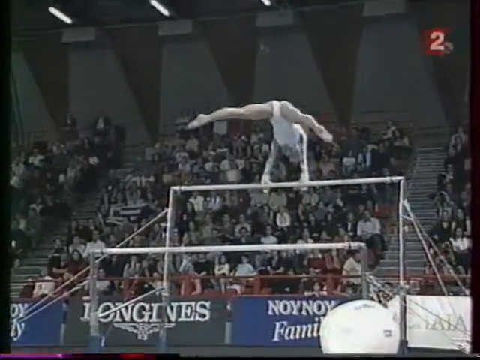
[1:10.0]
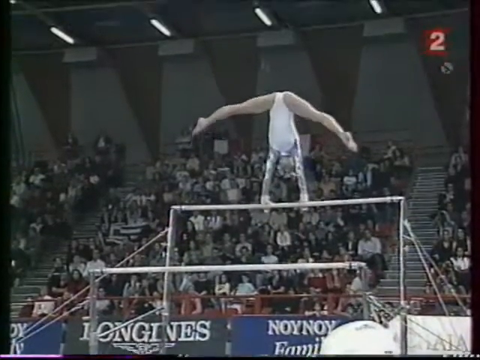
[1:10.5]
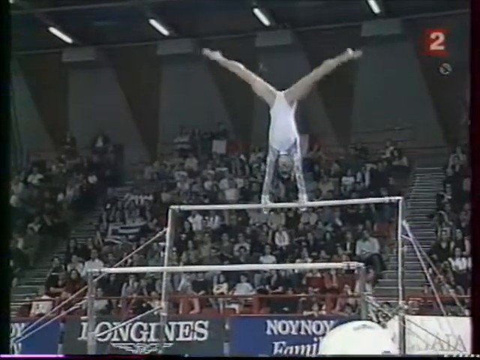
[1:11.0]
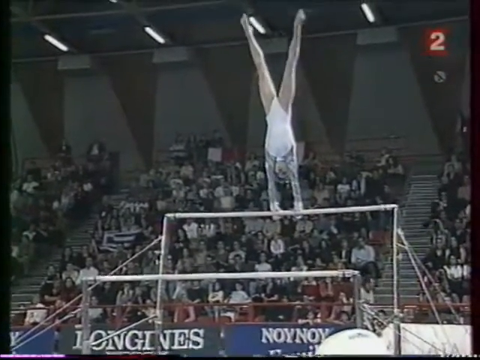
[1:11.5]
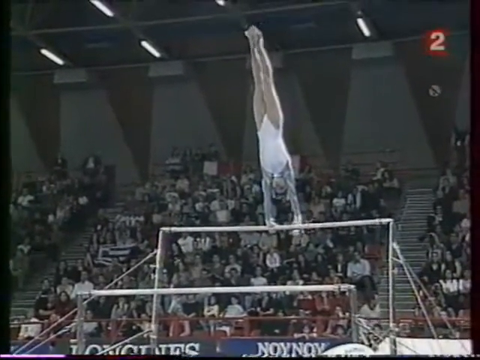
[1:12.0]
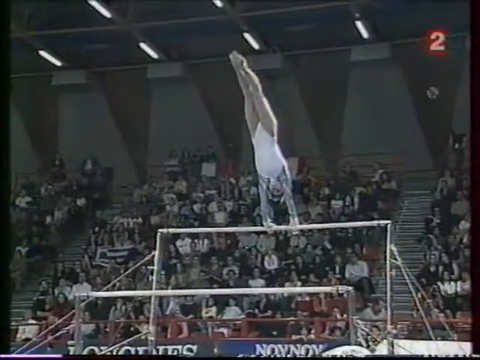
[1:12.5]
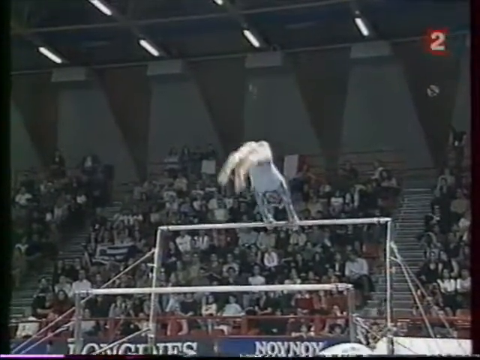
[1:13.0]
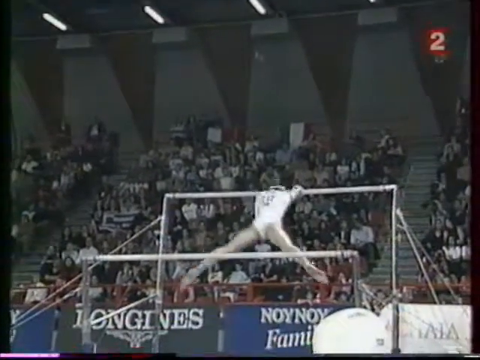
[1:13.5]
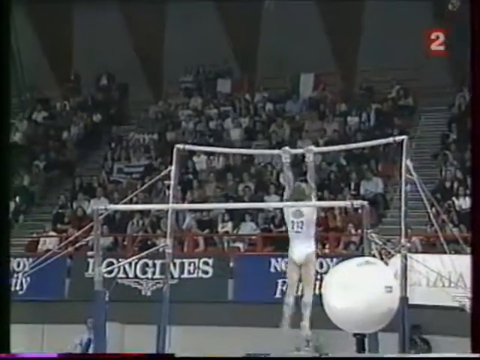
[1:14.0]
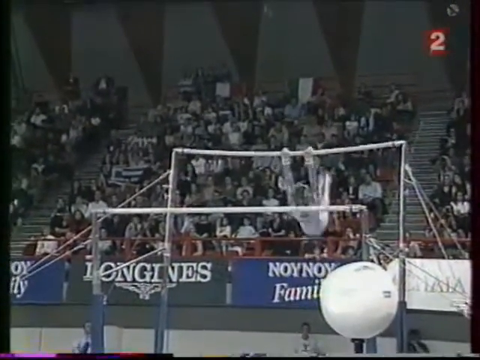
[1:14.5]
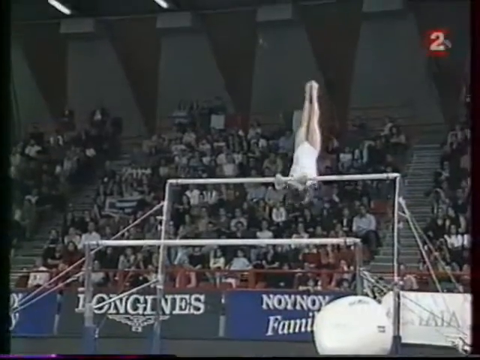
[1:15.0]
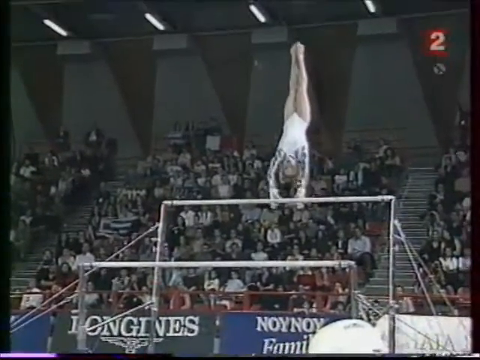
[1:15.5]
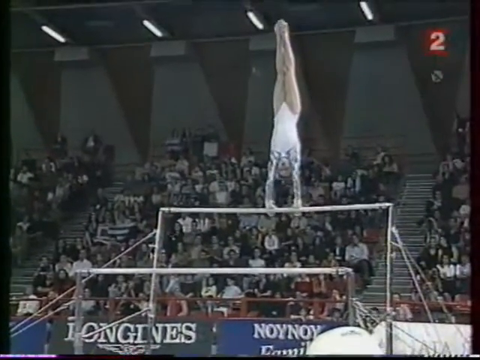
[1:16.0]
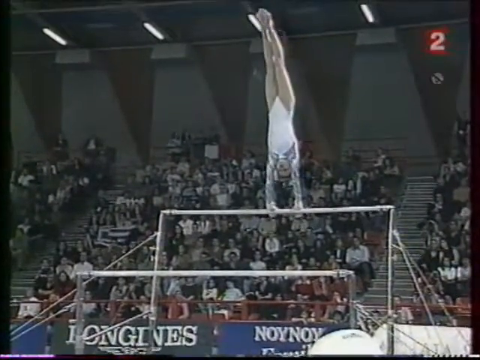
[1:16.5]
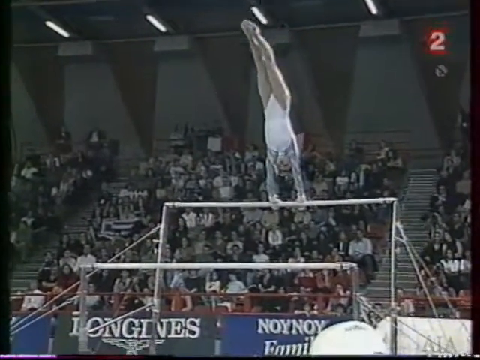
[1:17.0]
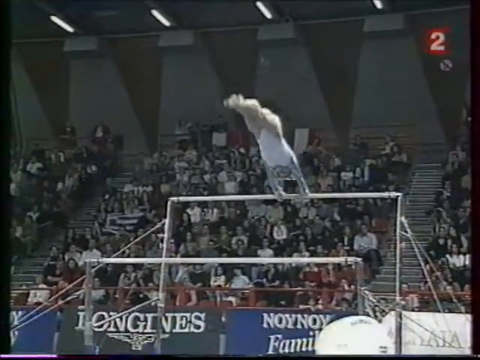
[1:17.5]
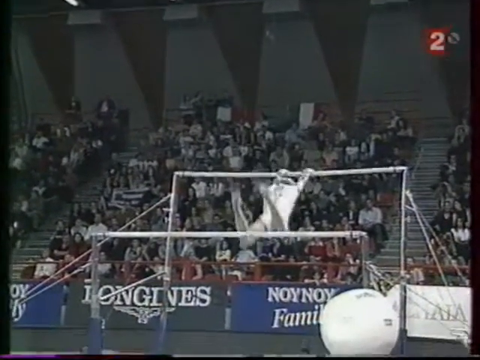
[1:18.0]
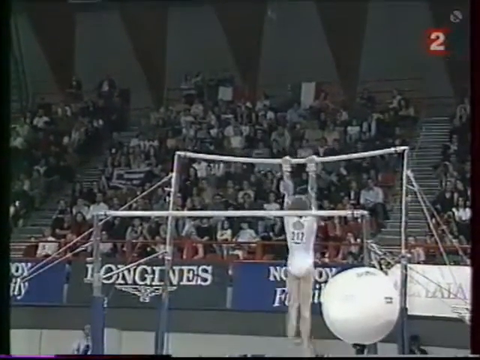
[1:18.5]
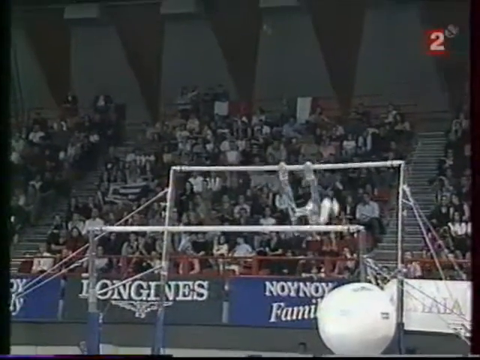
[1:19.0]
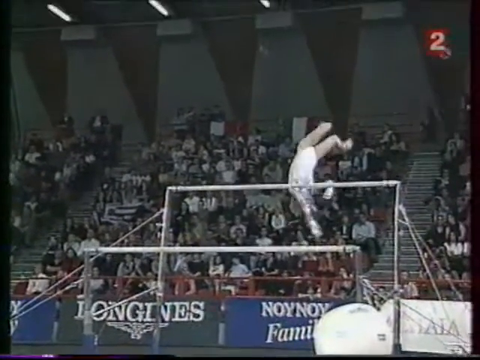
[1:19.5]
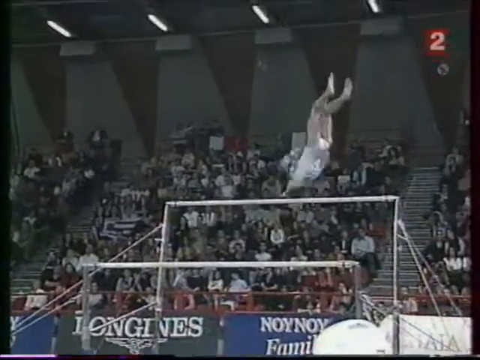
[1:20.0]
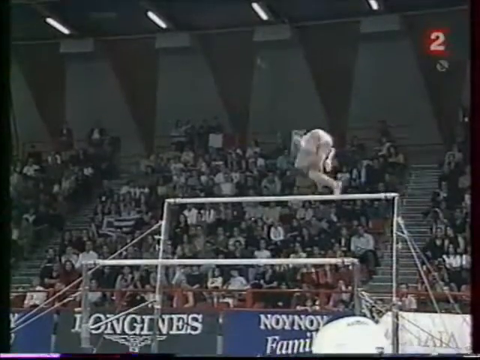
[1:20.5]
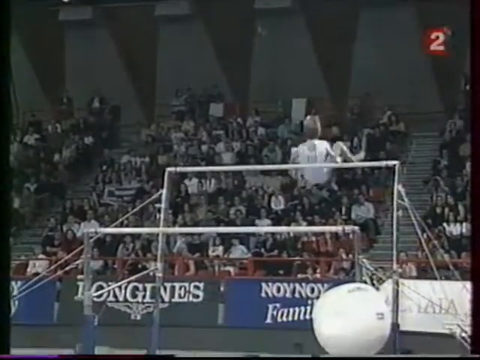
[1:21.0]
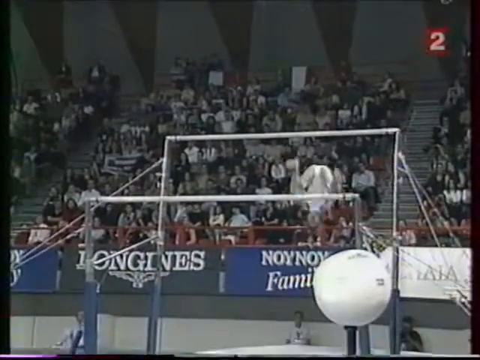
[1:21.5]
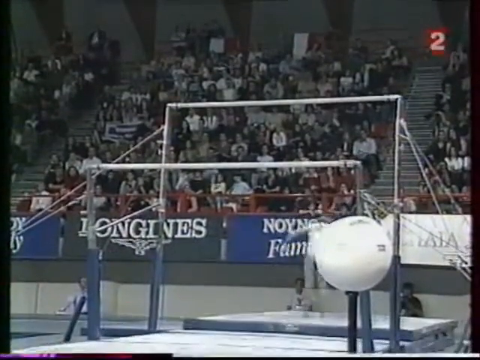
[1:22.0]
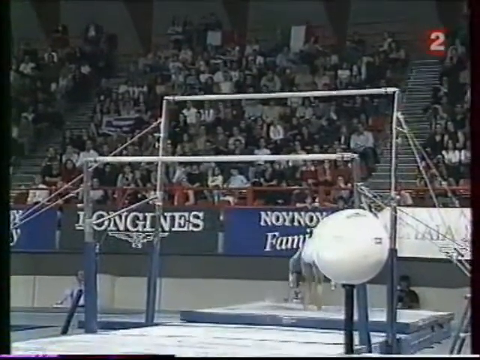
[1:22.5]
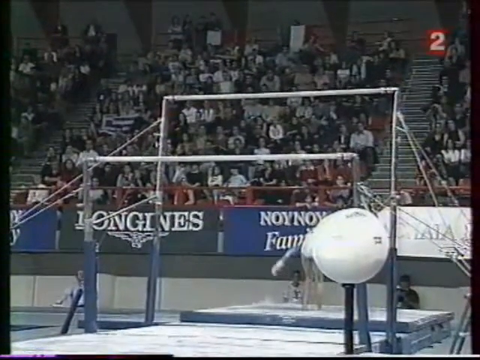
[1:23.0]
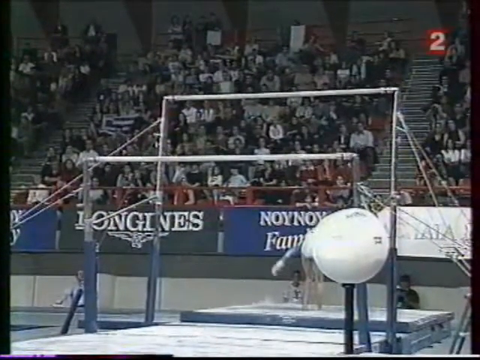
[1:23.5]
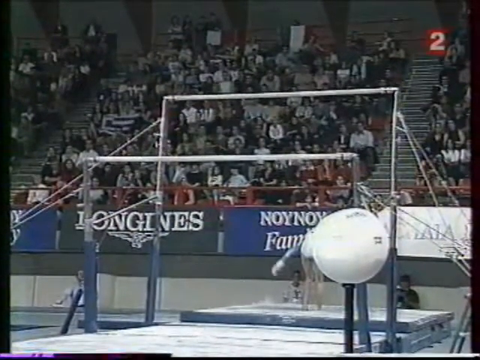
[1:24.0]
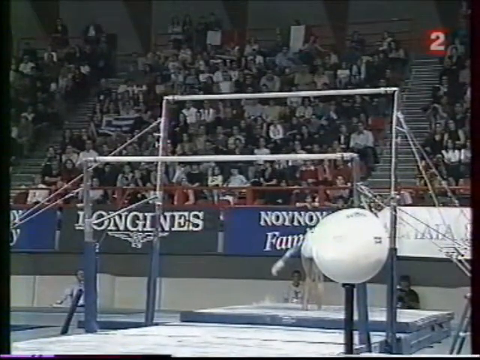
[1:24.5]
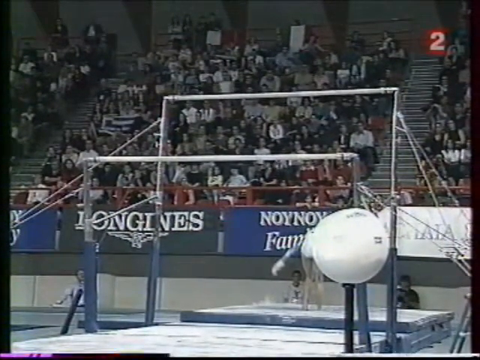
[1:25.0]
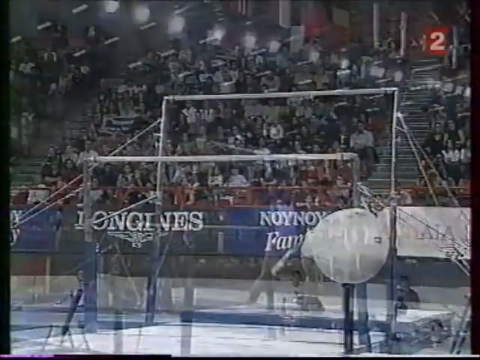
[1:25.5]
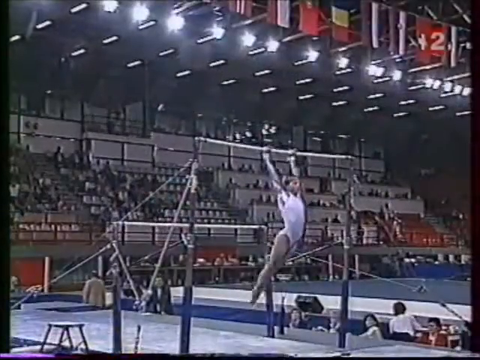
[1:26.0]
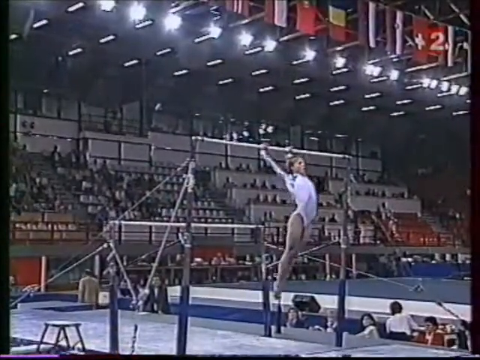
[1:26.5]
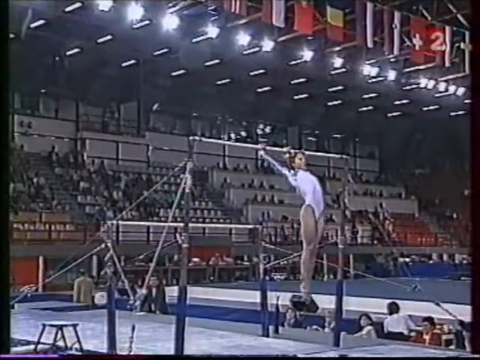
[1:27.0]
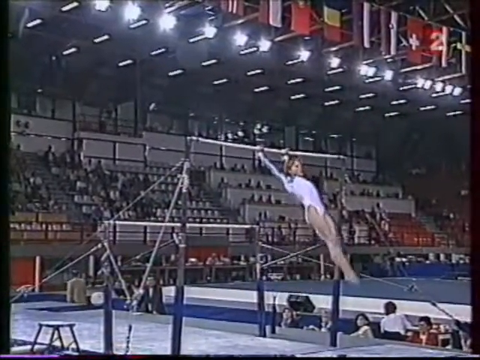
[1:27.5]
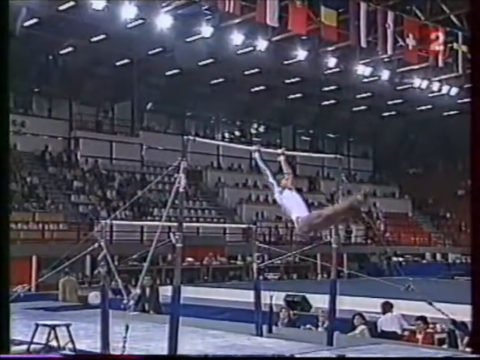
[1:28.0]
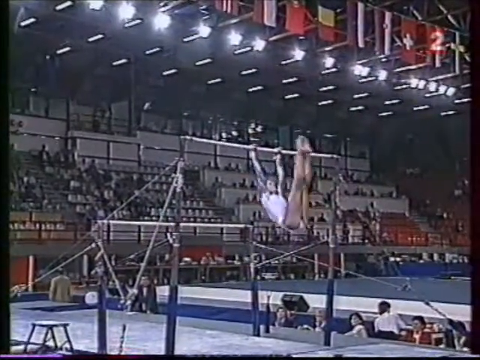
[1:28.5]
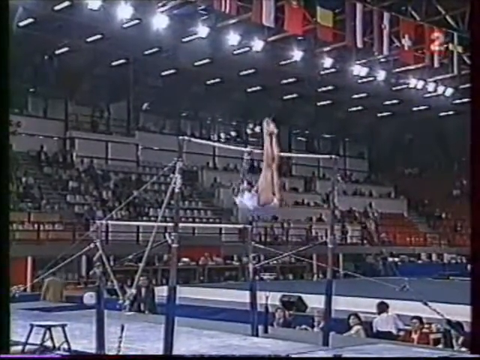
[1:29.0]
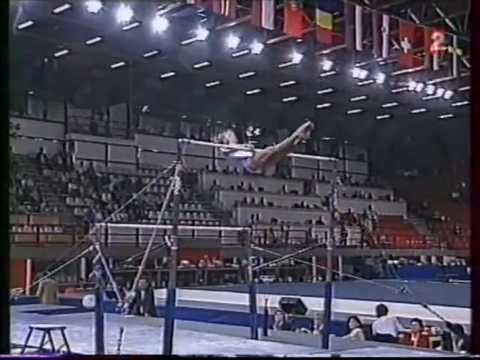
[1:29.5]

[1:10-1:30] The other side of the crowd is shown; the seating is pretty steep, and rows of black triangular things of unclear purpose run down along the top rows of the audience. At the top of the stairs a few sets of people stay at the sides. A number two in white with a red box around it is visible. Advertisements on the bottom rail include one reading "Longines", with what looks like an owl with its wings out, and a blue banner that is hard to read but says "Noi Noi family". The view returns to the gymnast going around the bar twice, her legs contorting and then at about a 90-degree angle. As she comes down, she uses her hands to pull the lower part of her legs quickly into her chest, then brings her feet together as she lands on a soft mat. A man squats nearby, possibly taking a picture, and another man watches her.